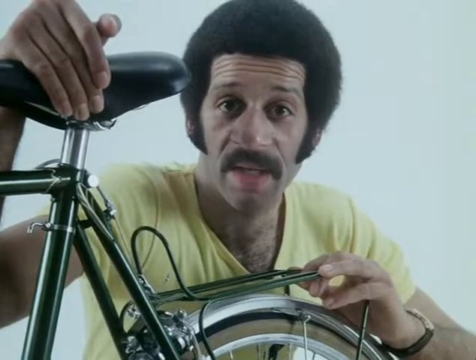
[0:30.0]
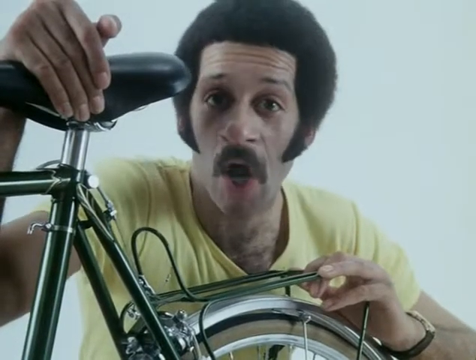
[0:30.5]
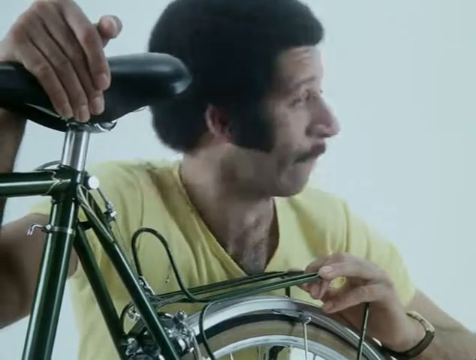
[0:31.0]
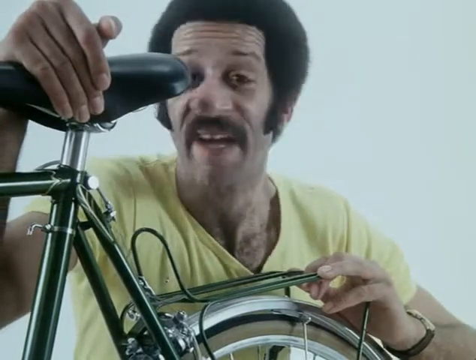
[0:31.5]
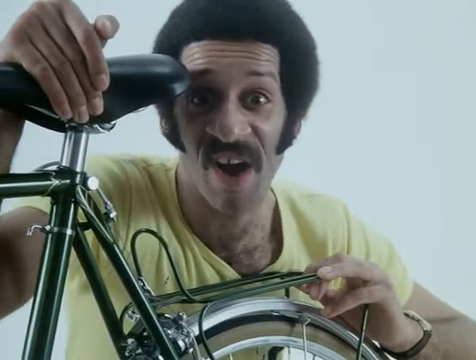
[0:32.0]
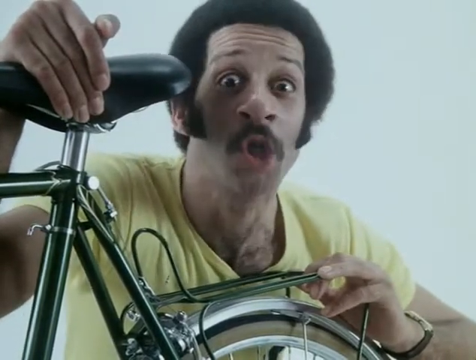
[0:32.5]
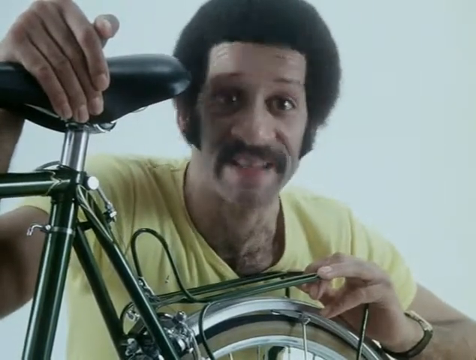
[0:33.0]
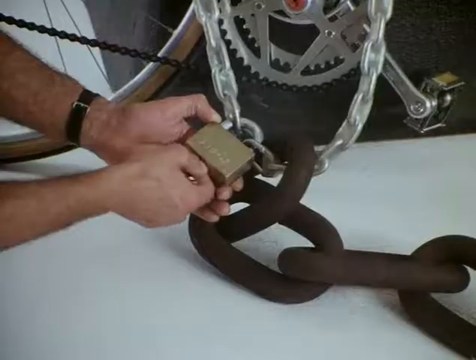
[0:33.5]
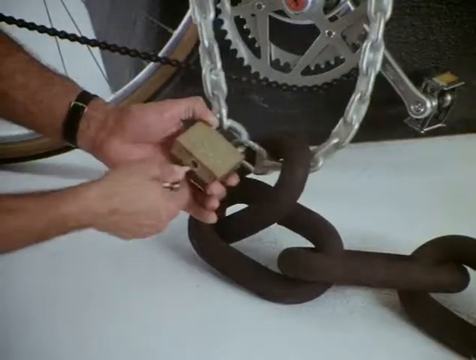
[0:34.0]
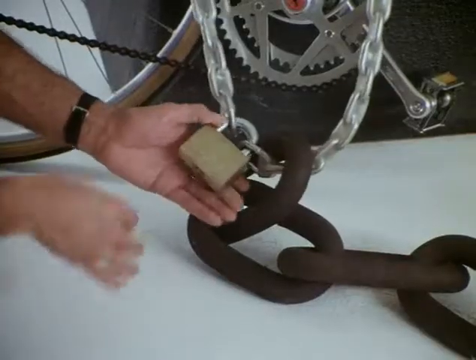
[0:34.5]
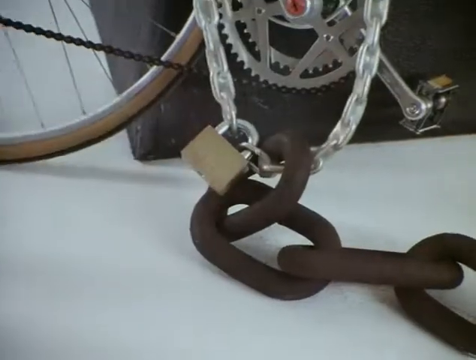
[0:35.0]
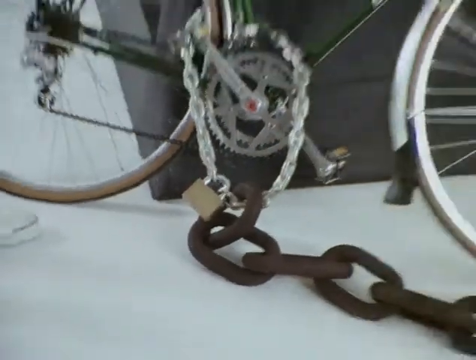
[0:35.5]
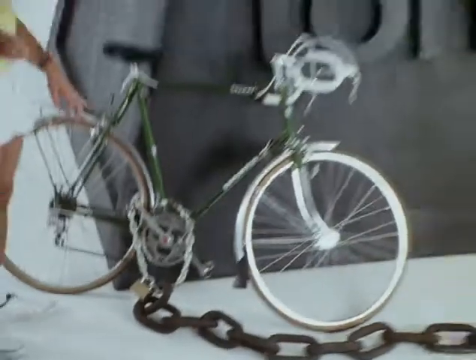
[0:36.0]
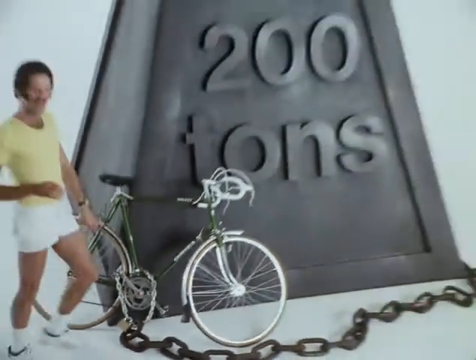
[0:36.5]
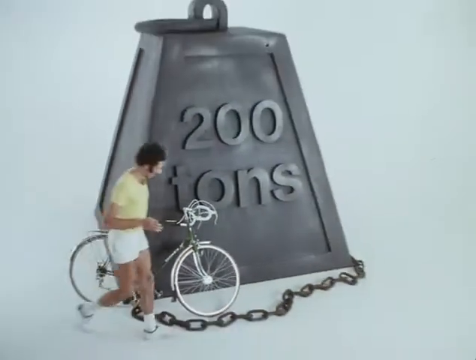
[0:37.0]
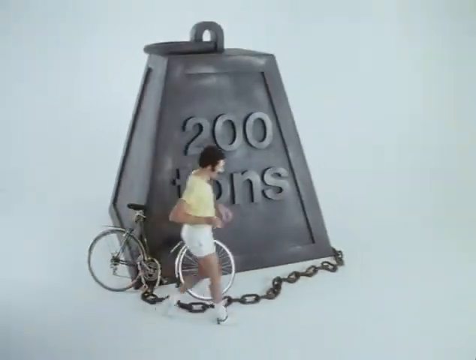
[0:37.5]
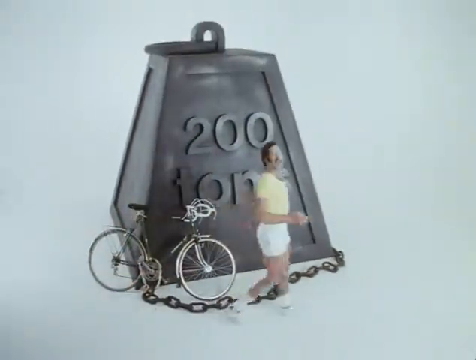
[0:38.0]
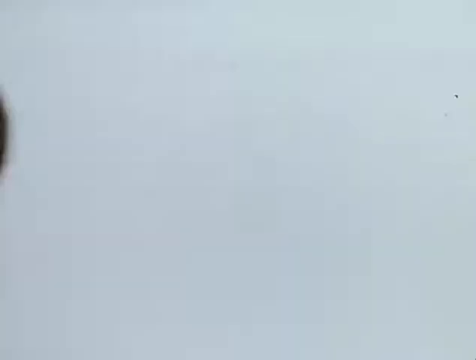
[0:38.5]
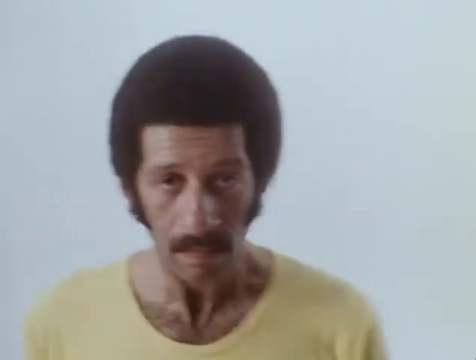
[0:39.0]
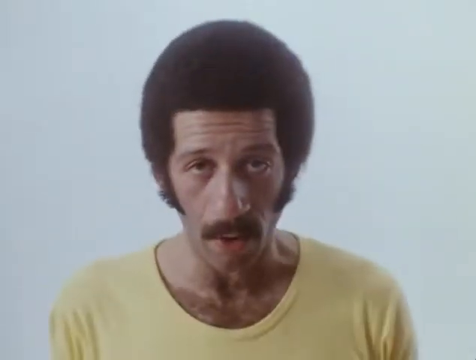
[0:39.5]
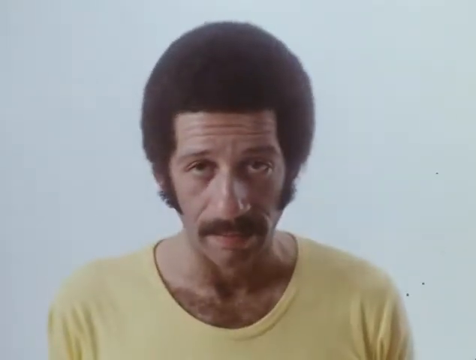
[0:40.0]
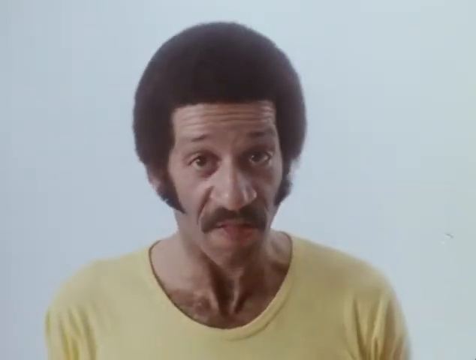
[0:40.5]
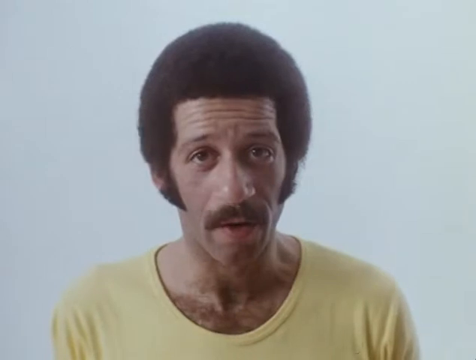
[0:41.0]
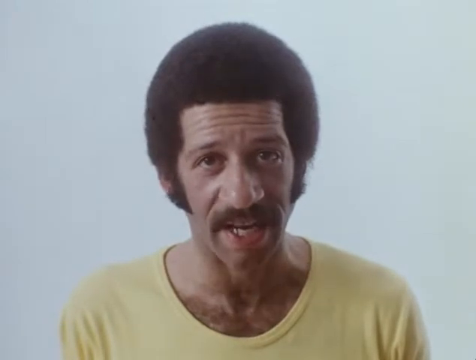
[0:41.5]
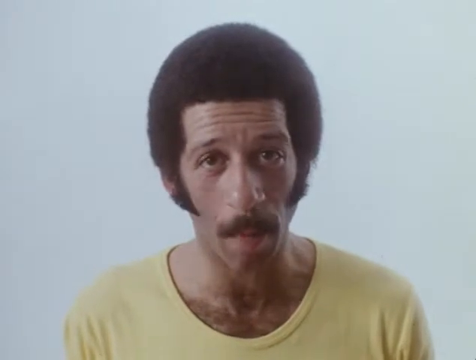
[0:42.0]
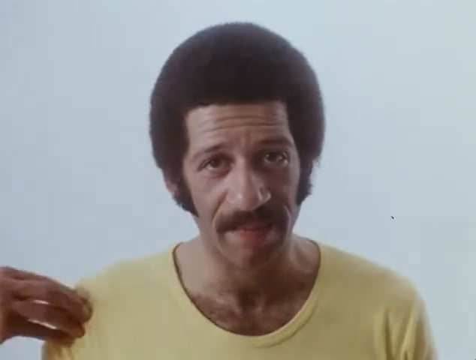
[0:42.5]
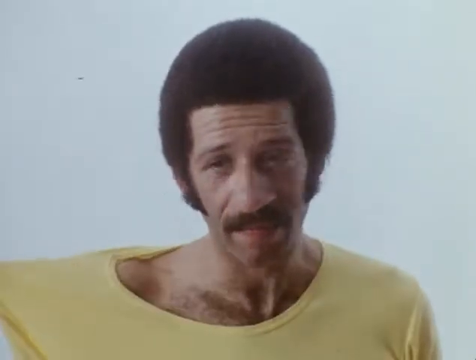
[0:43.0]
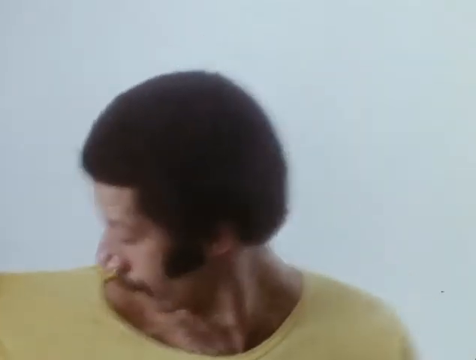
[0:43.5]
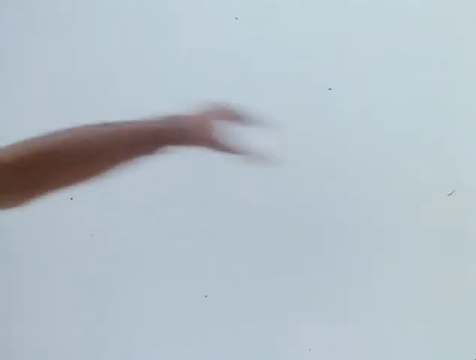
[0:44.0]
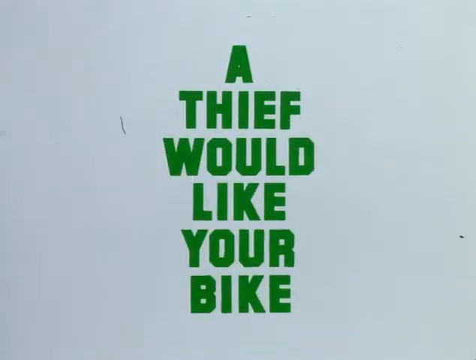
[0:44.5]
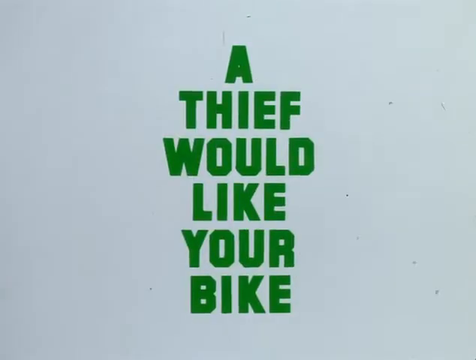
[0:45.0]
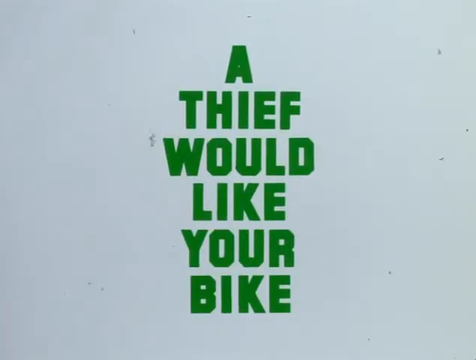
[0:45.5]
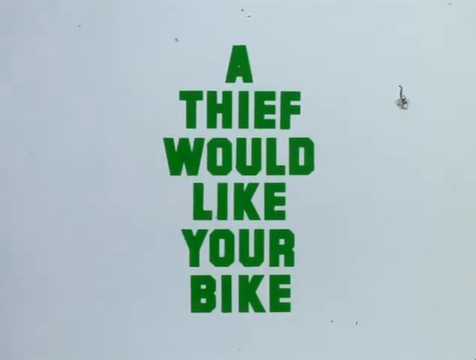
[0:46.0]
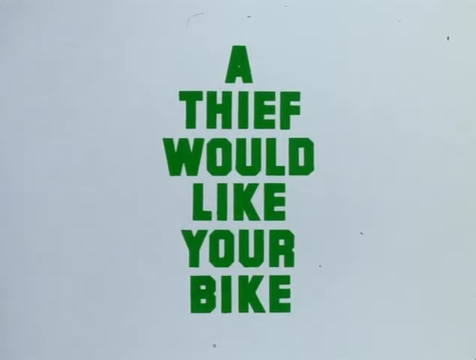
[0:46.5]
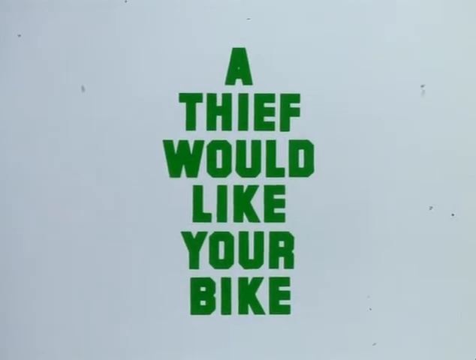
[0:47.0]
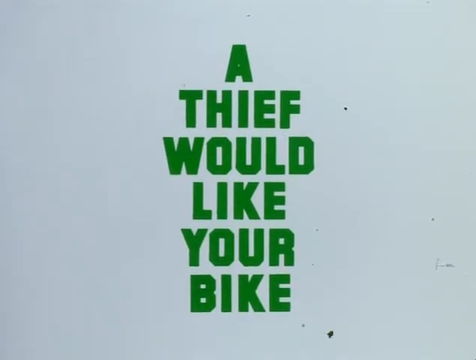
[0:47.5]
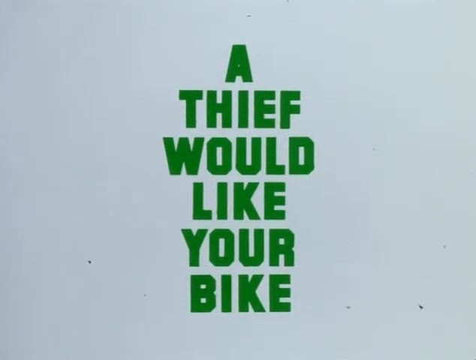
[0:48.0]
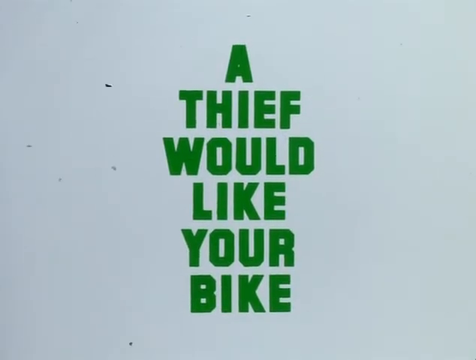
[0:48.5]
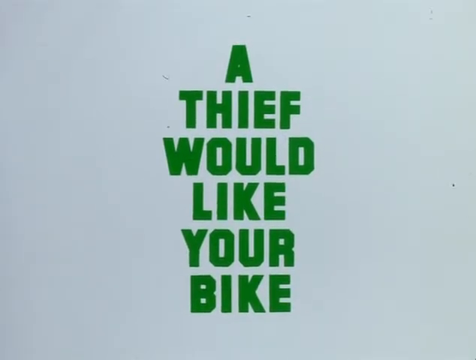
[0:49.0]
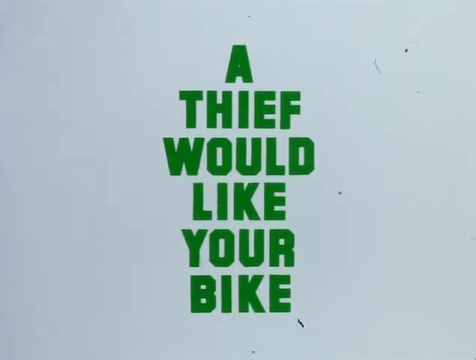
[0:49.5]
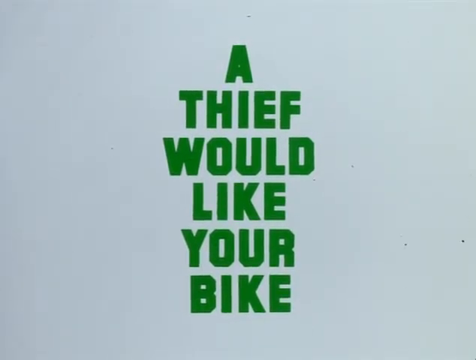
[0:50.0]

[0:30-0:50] The Black man who was riding the bicycle, with a short Afro-style haircut, faces the camera and speaks intently, with his right hand over the seat and his left hand on the rack above the rear wheel. A close-up shows a bicycle lock: a padlock and a silver chain going through the fork above the pedal sprocket and through the rear wheel, connecting to a very large, overly illustrated black chain that leads off the lower right corner of the screen. The bike leans on the outer corner of what appears to be a dark-painted gray pyramid-style weight that says "200 tons", an exaggerated, almost humorous image of securing the bicycle. The man talks in the middle of the screen facing the viewer, then walks off the left side. Green text in all capitals reads "A THIEF WOULD LIKE YOUR BIKE" on a white background with vertical black borders on each side. After this message, the screen transitions to black.